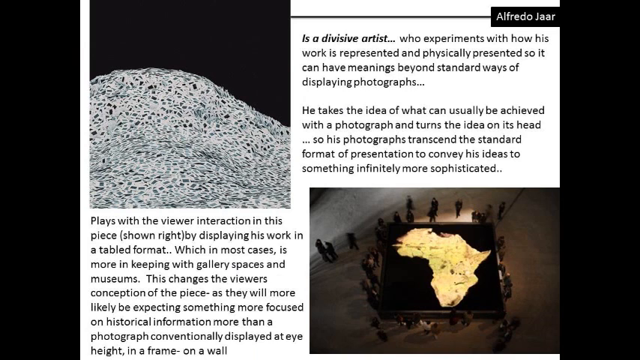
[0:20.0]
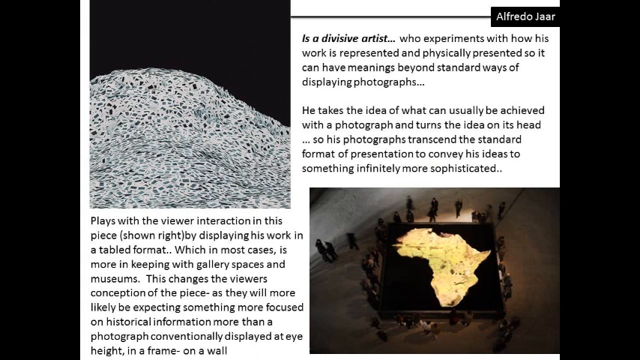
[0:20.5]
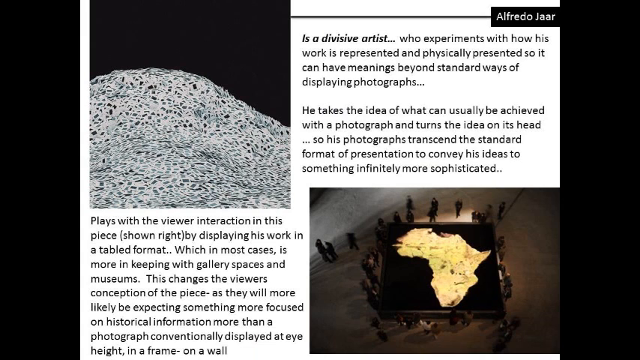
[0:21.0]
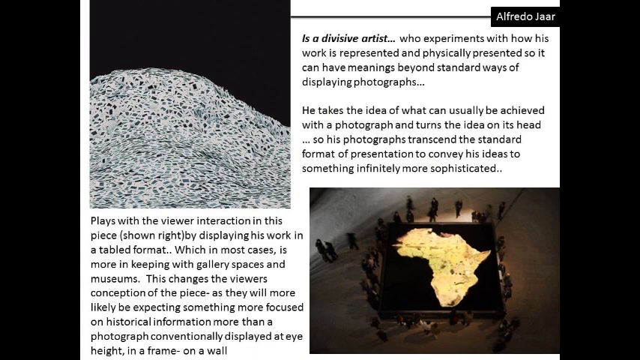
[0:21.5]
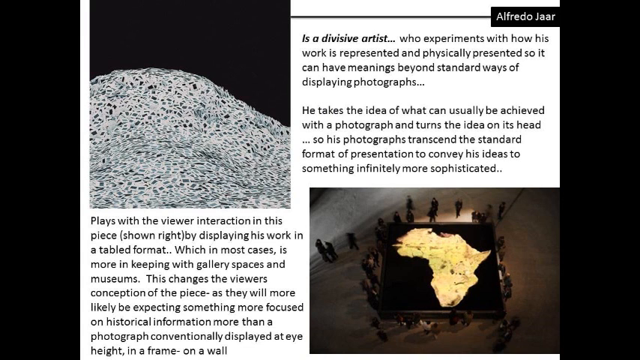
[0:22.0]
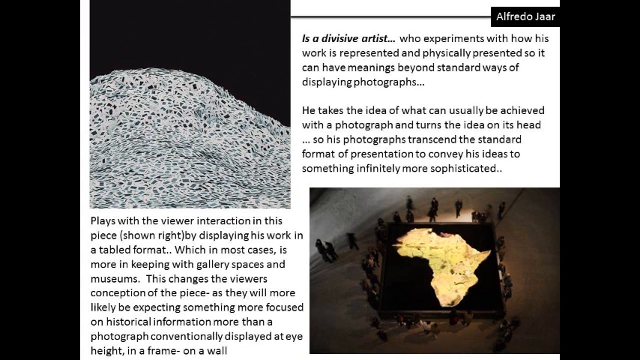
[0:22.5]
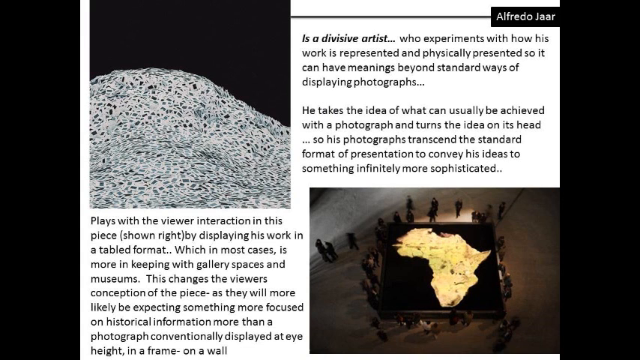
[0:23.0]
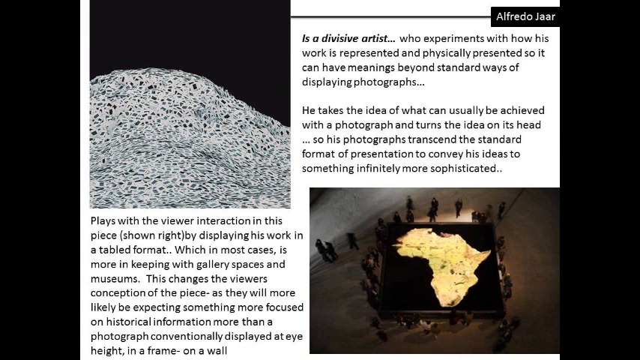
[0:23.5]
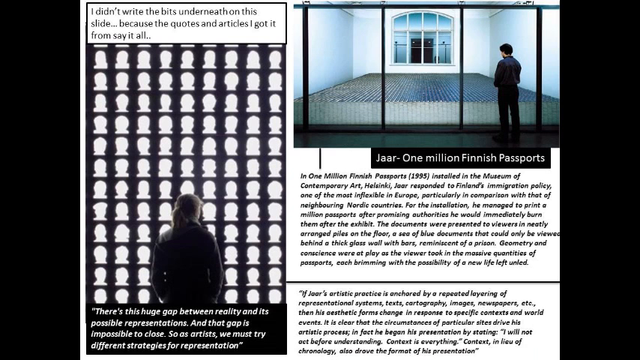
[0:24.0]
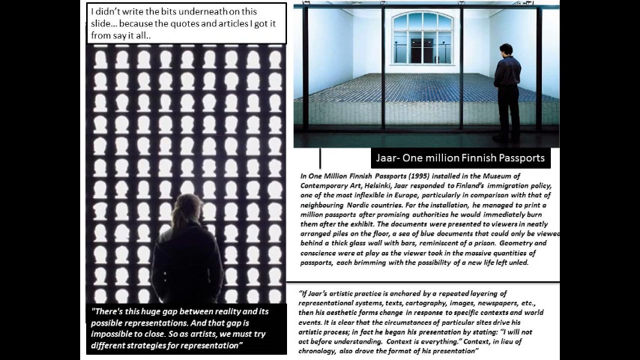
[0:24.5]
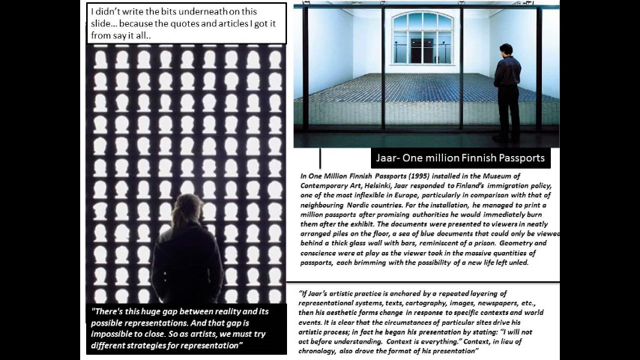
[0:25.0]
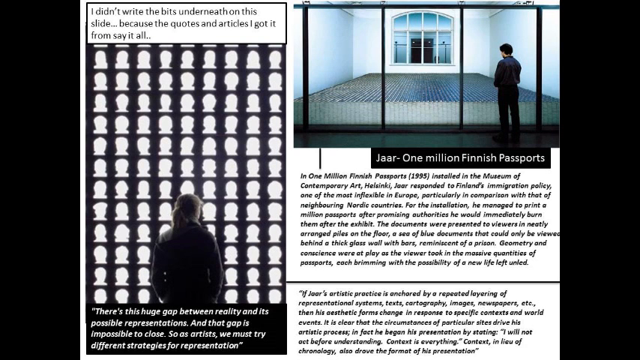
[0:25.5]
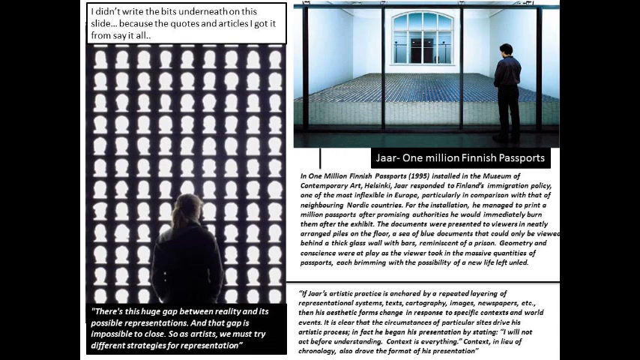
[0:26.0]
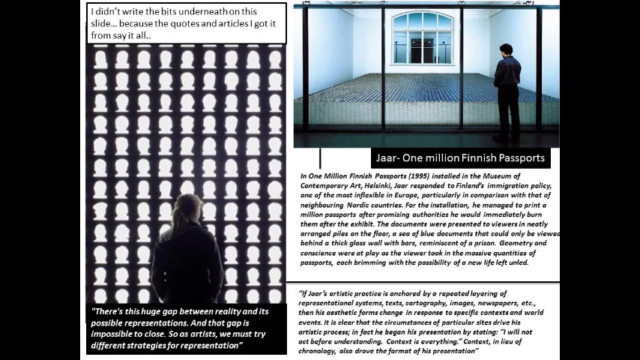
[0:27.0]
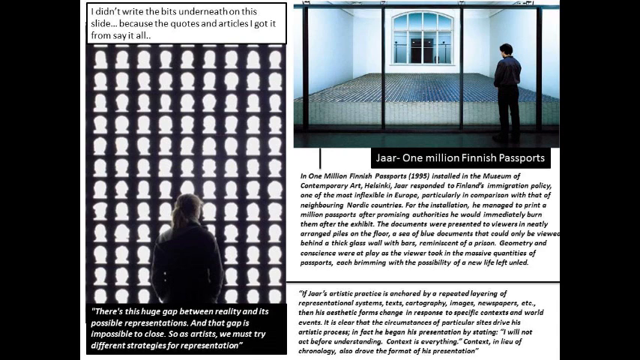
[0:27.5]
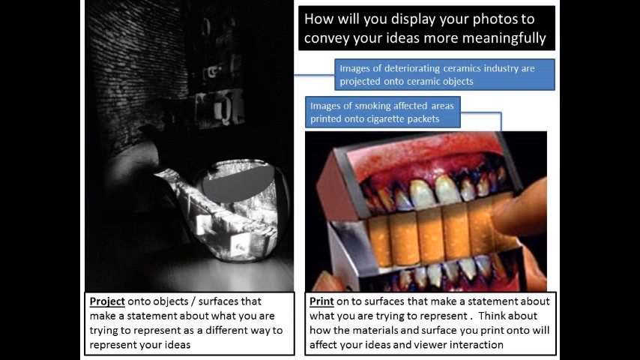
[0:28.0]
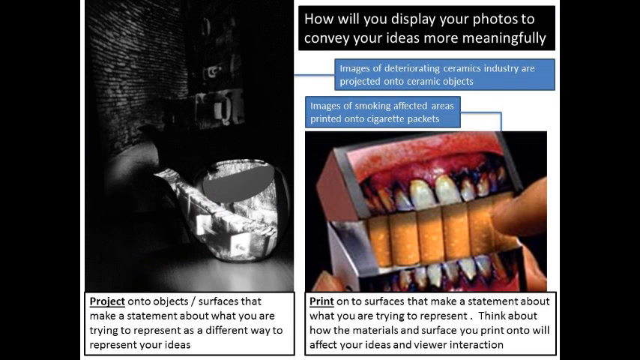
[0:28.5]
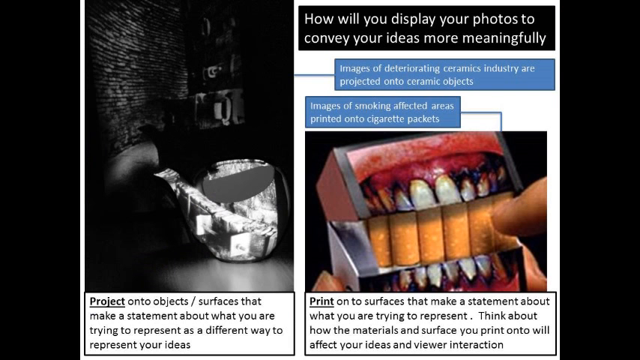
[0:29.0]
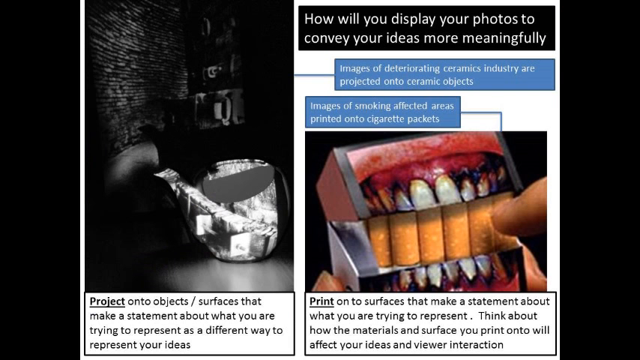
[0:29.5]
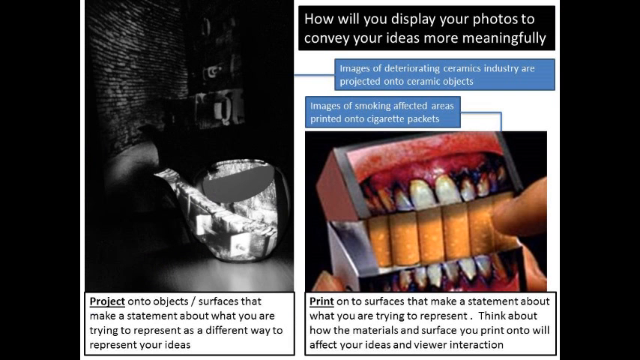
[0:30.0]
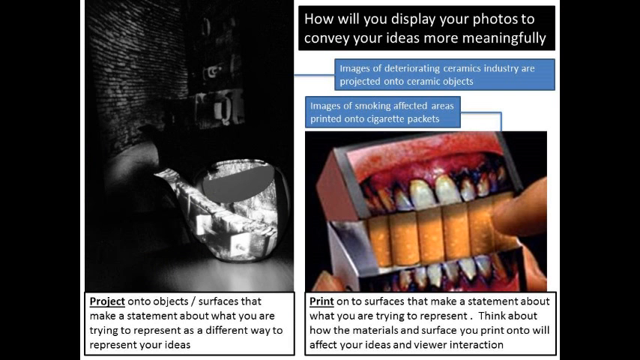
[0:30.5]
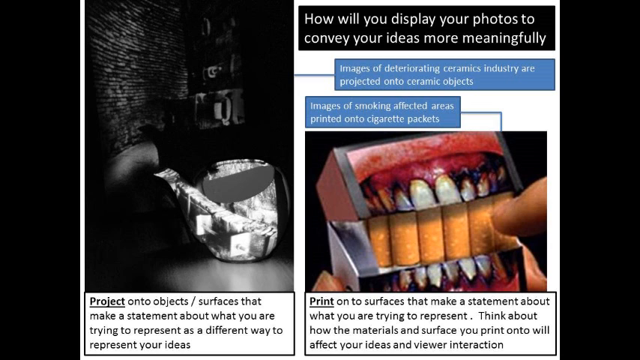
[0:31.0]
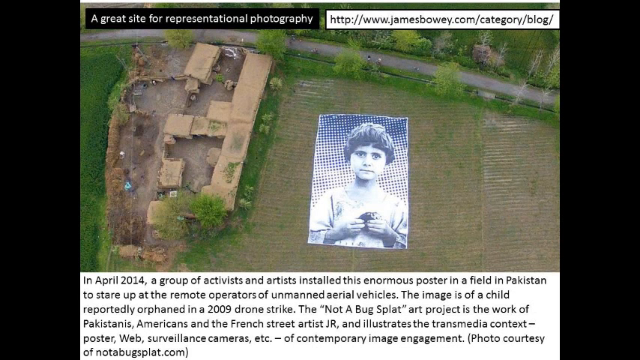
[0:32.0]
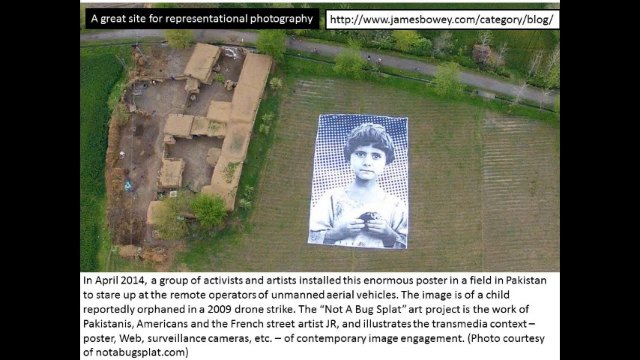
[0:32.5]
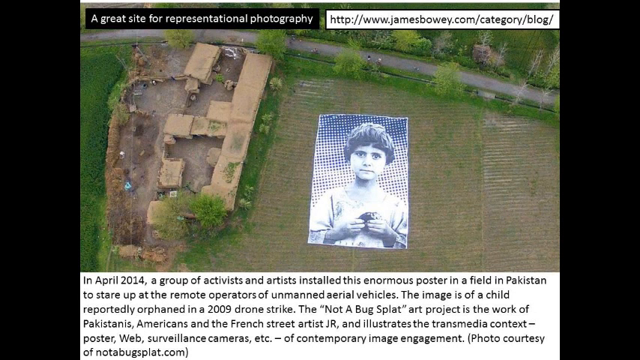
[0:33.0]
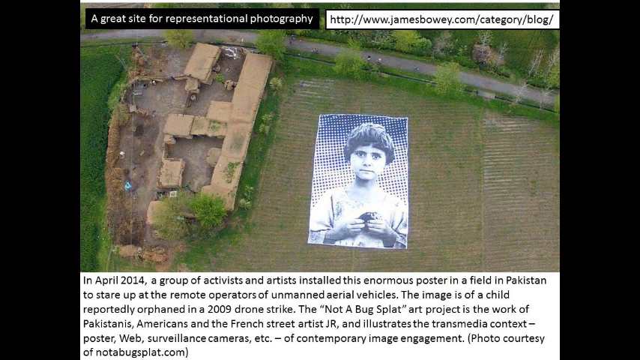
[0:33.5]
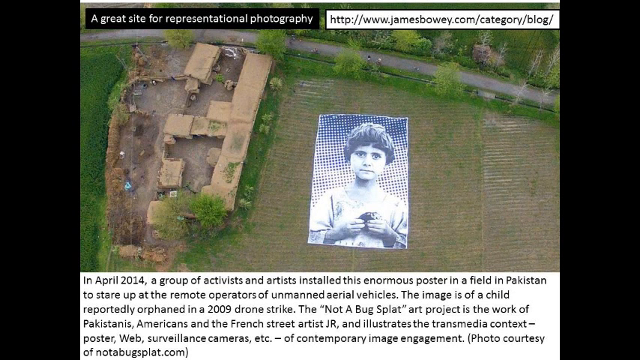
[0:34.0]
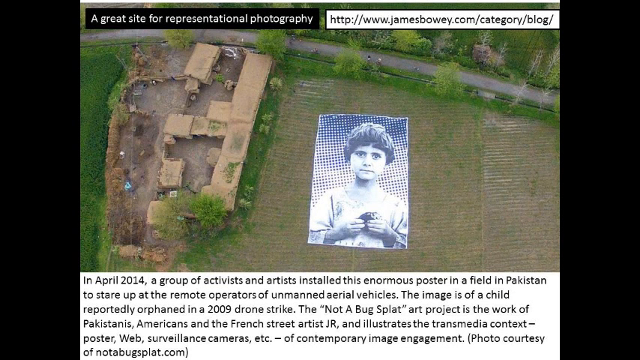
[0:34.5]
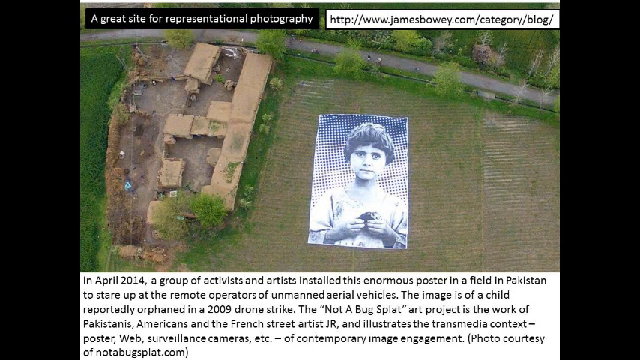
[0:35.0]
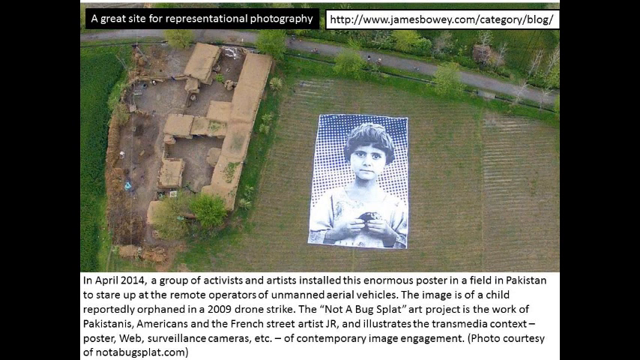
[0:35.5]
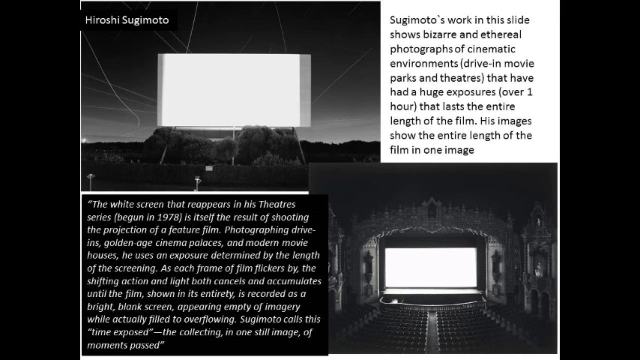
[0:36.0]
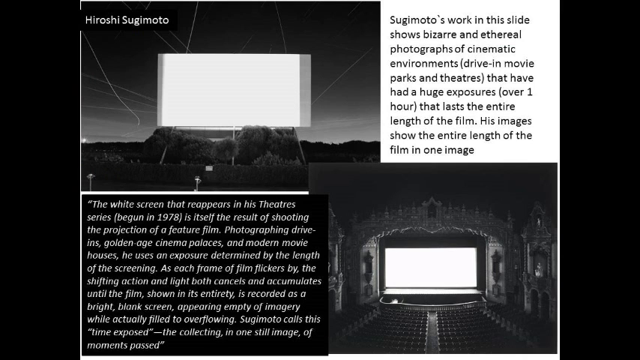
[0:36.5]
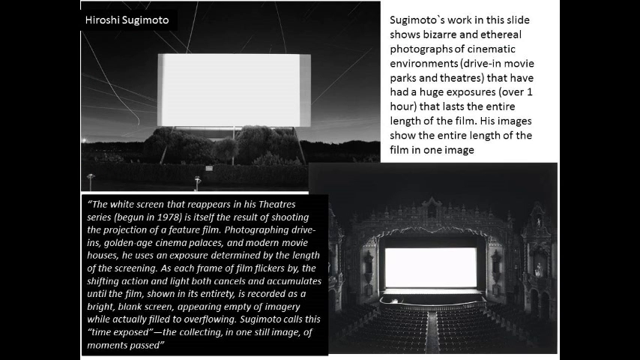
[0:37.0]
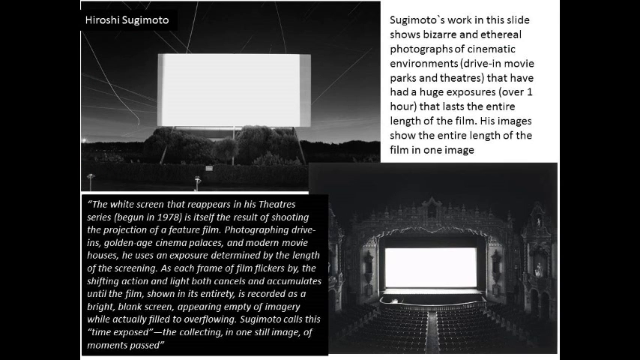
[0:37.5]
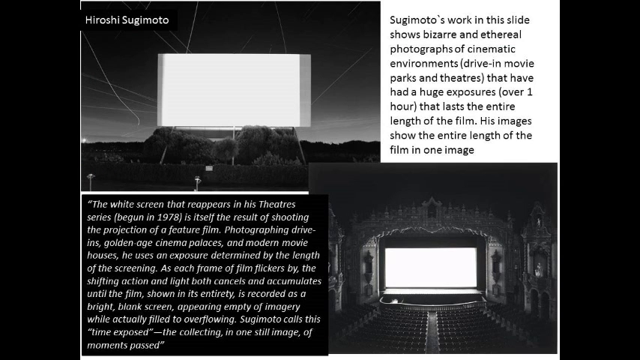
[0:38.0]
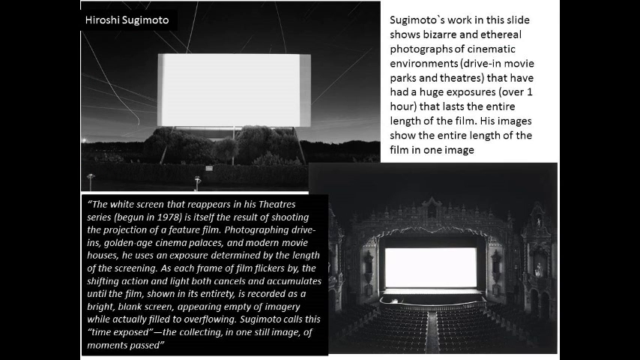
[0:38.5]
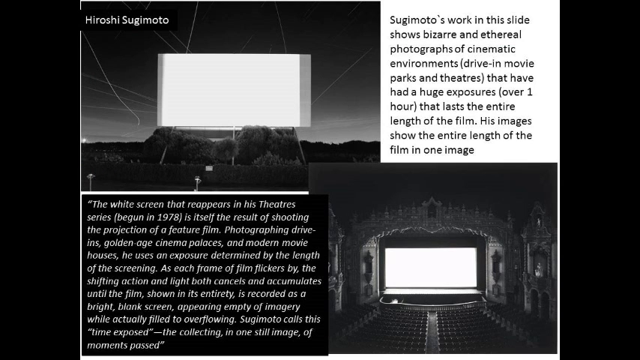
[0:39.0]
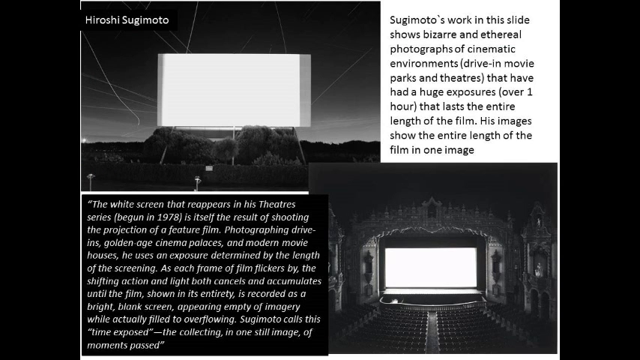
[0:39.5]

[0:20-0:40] Photos appear with descriptions under or above each one. One photo is by Alfredo Jah, and its text describes him as "a divisive artist who experiments with how his work is represented and physically presented so it can have meanings beyond the standard ways of displaying photographs". This photograph shows a map of Africa surrounded by different people. The one next to it looks like a microscopic view of some organism and also has text describing the photographer. The next photographs include one of a human being looking at different face profiles, and next to it another called "YAR-1, 1 million Finnish passports", showing a man looking at what appear to be small things on the ground; the man stands outside the glass. Another photograph is in a dark environment with a Chinese symbol written in it. Another shows teeth and cigarettes made to look like upper and lower teeth. Another photo shows a top view of a village, and there is a photograph of a young boy. Further pictures are by Hiroshi Sugimoto.